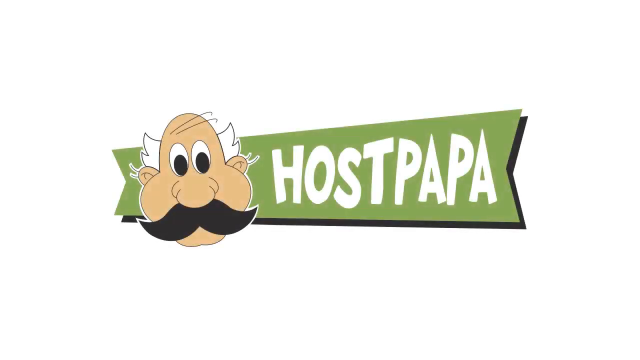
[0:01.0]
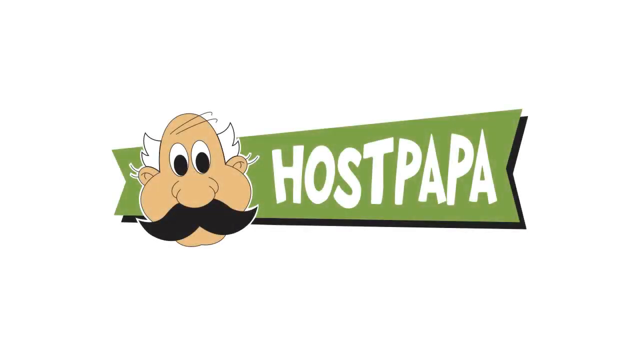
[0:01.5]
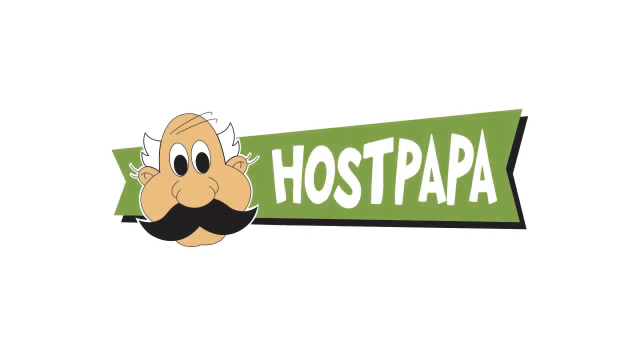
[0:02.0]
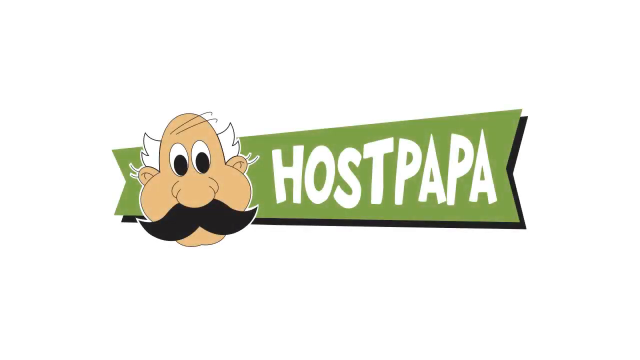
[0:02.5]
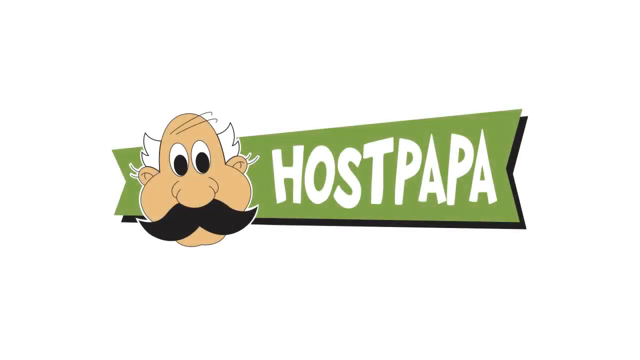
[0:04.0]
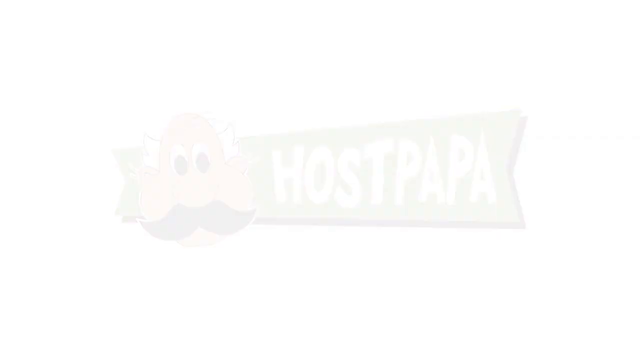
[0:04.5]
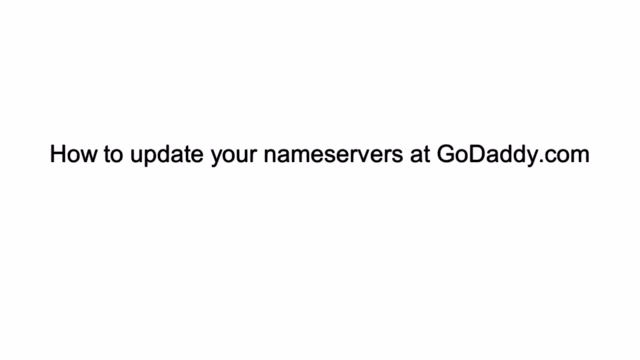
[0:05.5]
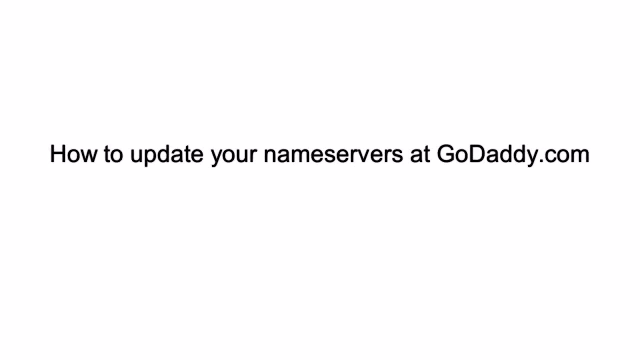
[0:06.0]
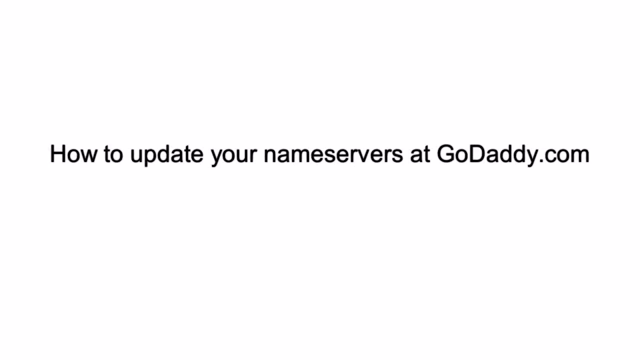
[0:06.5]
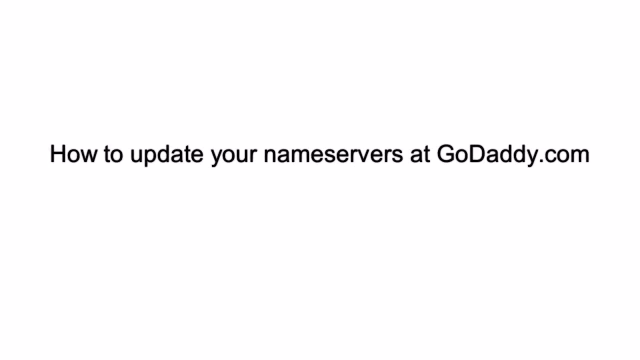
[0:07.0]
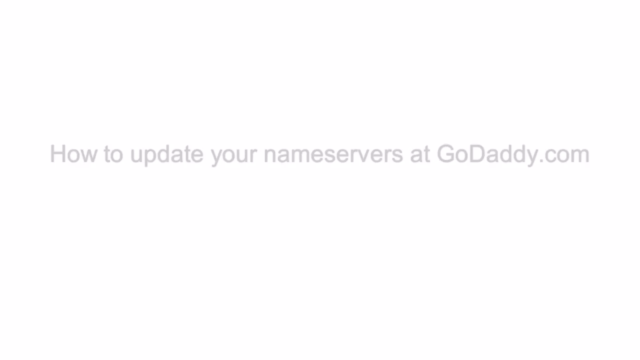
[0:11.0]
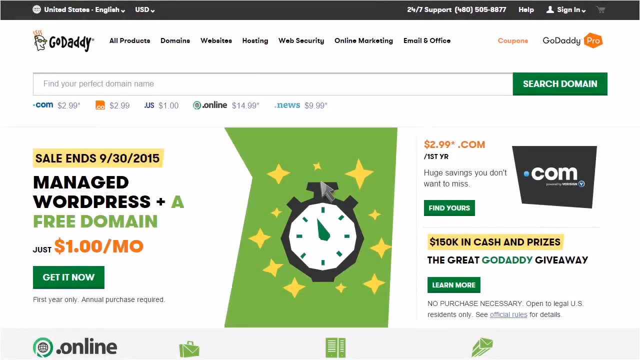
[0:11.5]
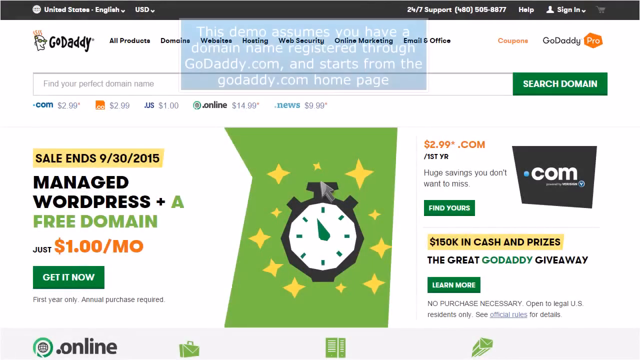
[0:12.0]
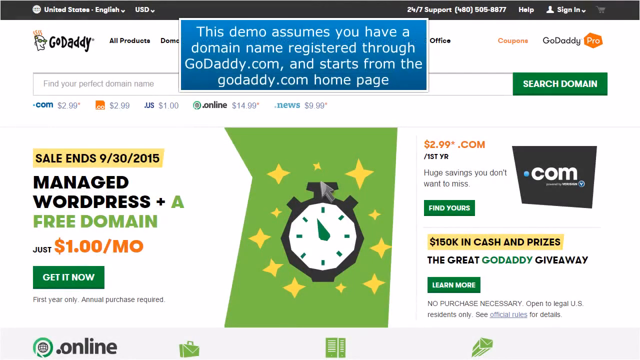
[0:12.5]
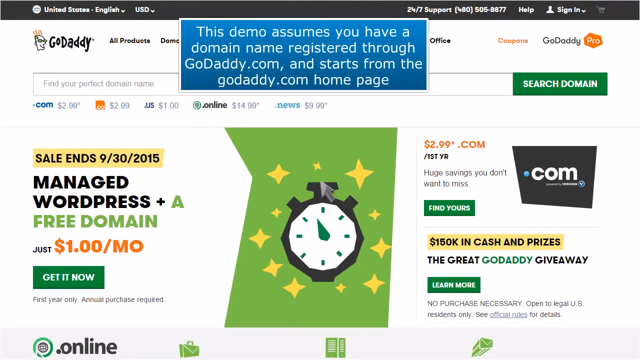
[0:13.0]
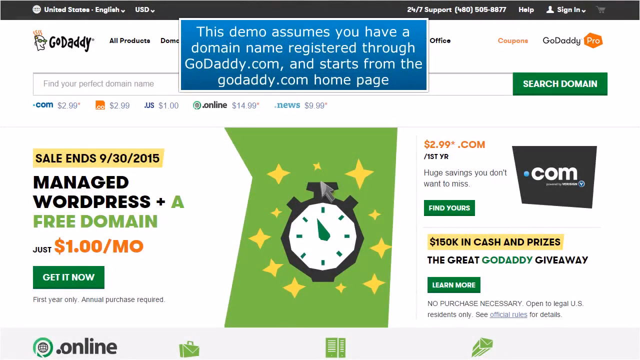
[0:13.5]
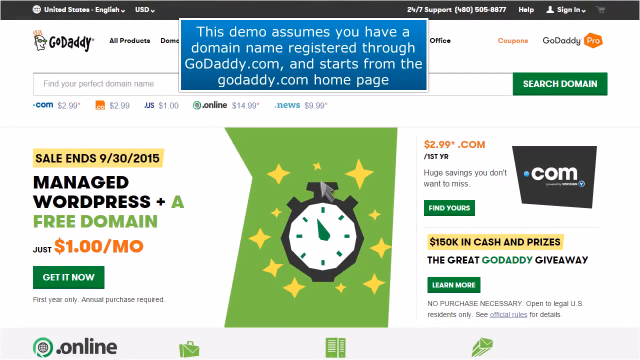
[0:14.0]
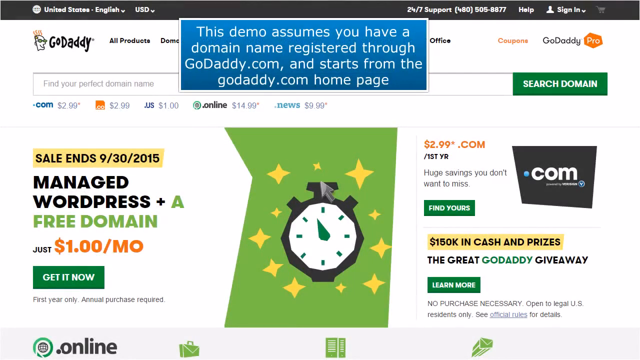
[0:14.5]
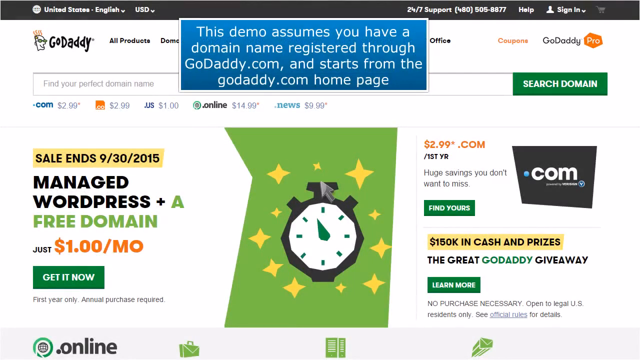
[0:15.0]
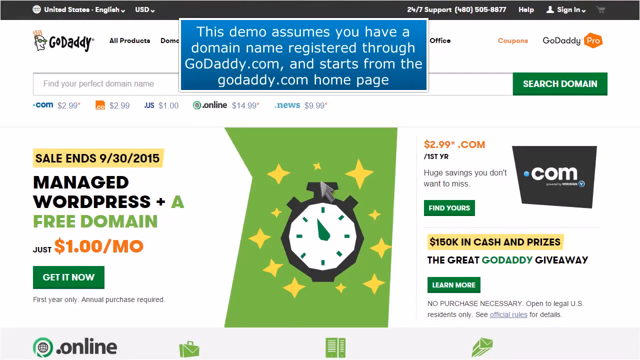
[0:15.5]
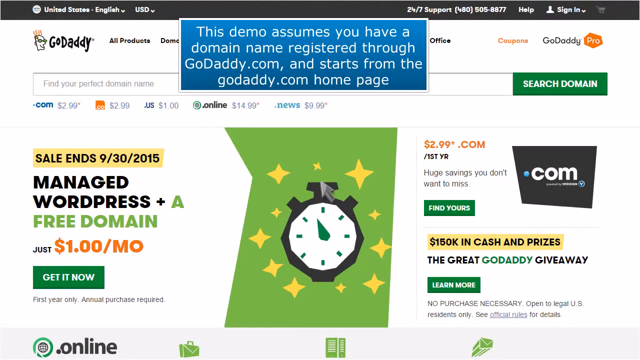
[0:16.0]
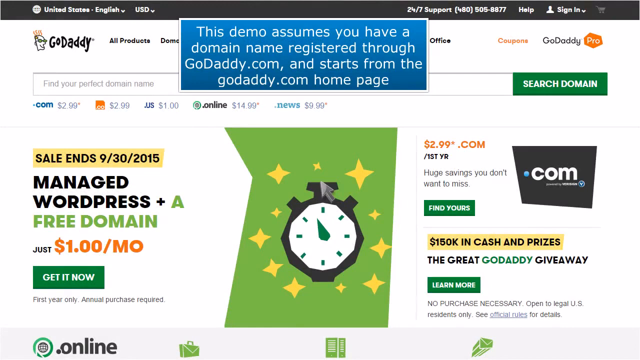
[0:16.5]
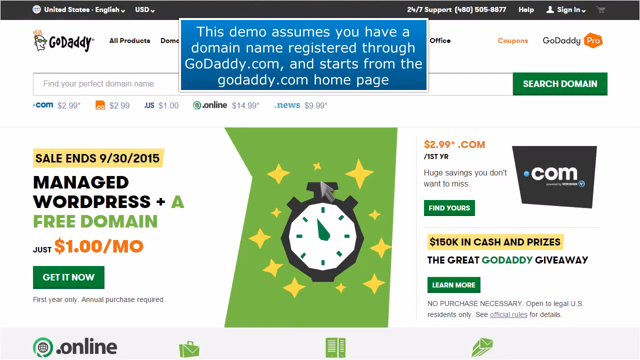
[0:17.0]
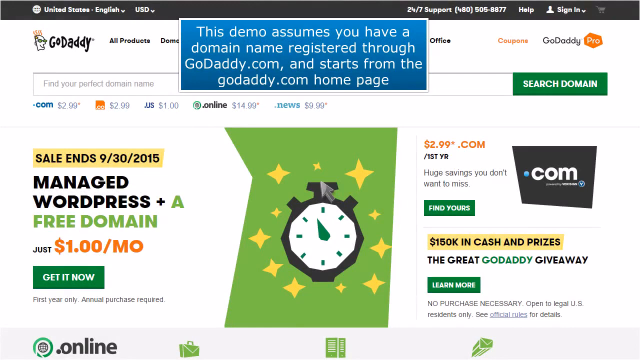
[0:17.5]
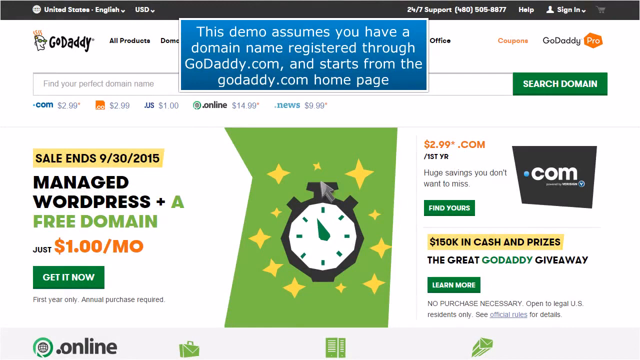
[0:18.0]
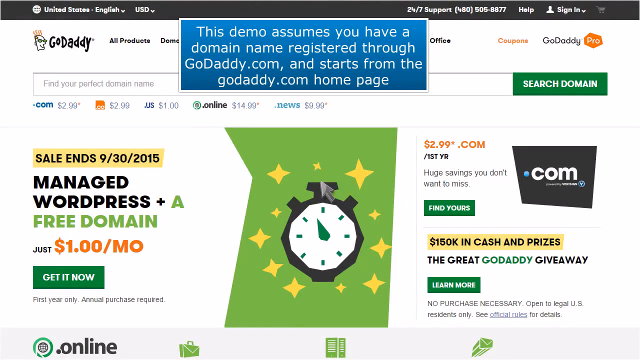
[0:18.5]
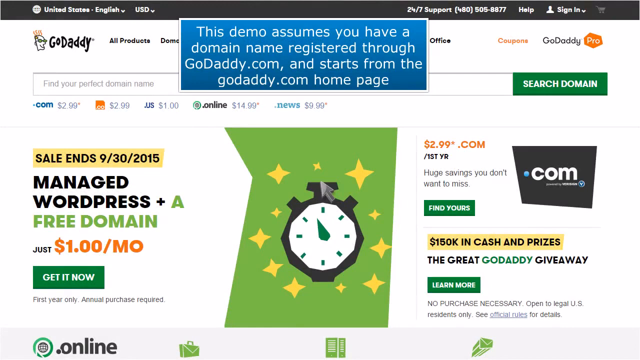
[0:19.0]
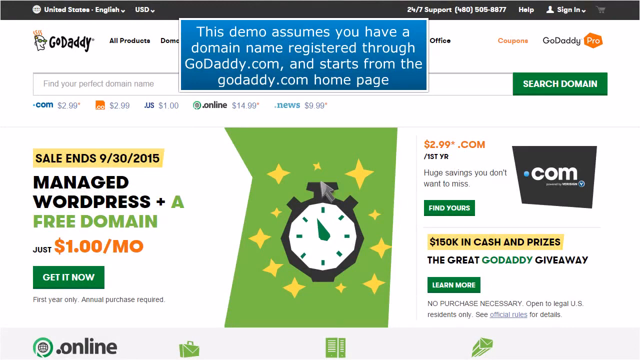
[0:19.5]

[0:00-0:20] The video is a demonstration of how to update name servers at GoDaddy.com, assuming a domain name is registered with GoDaddy.com. It starts from the GoDaddy.com home page.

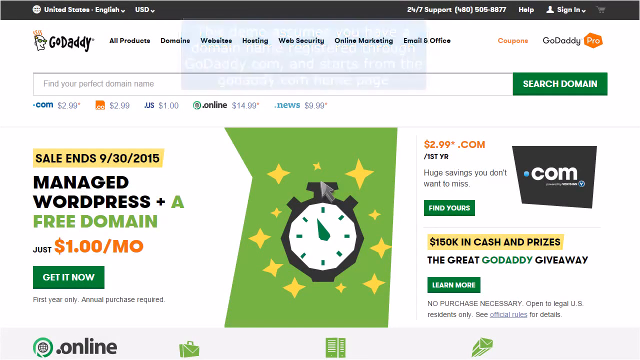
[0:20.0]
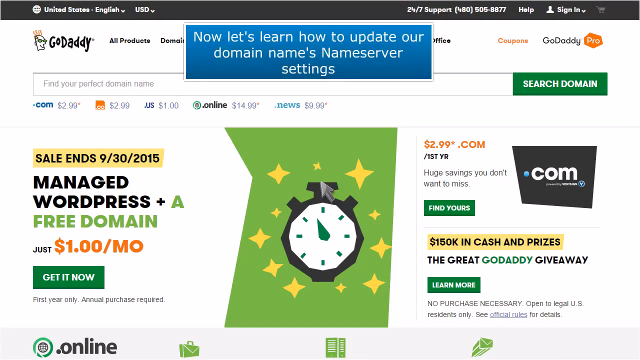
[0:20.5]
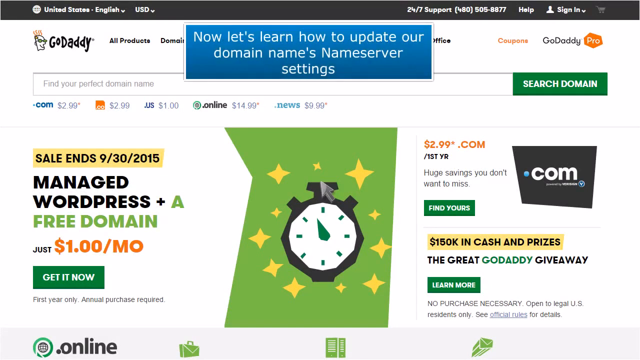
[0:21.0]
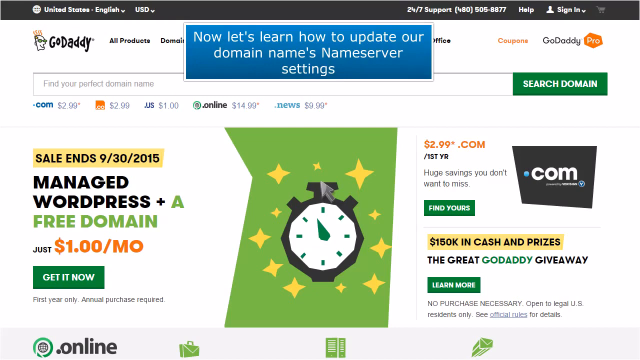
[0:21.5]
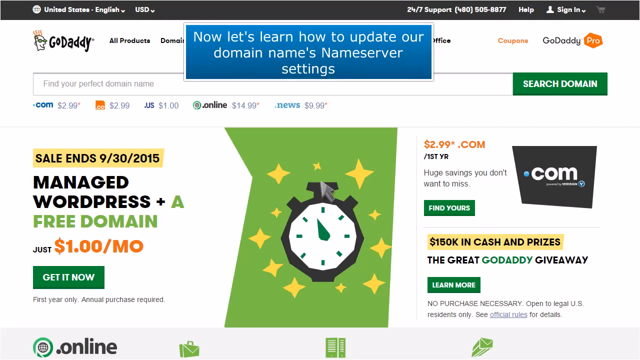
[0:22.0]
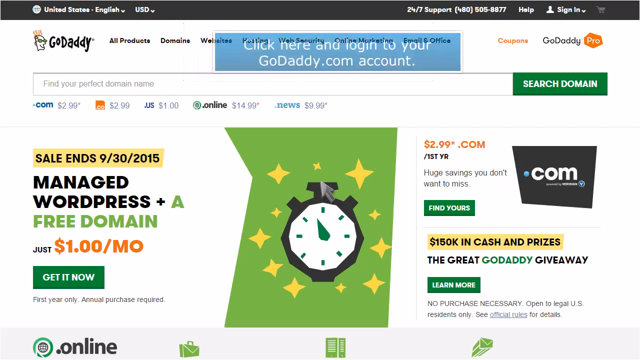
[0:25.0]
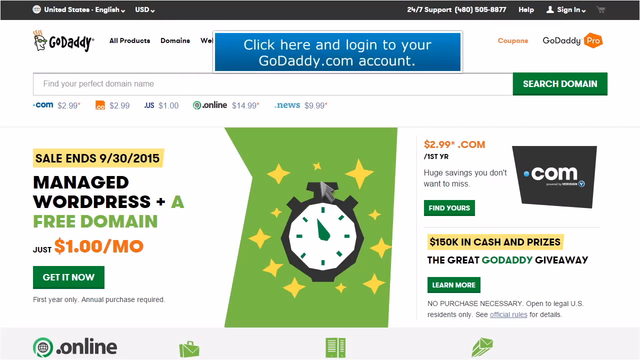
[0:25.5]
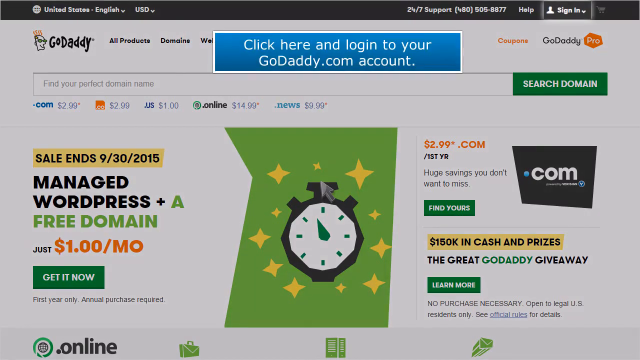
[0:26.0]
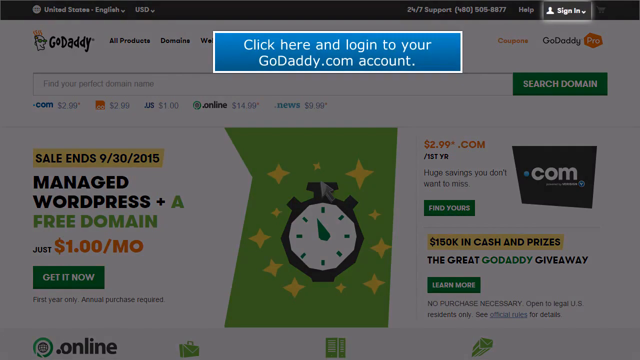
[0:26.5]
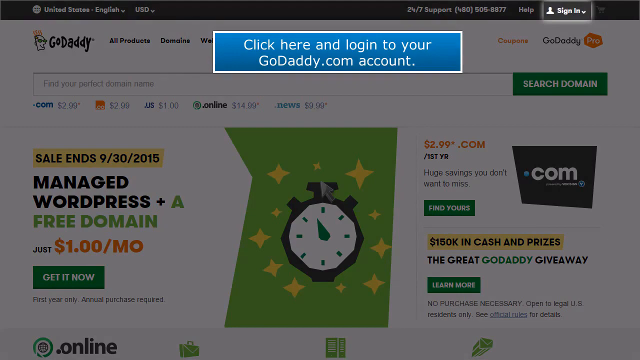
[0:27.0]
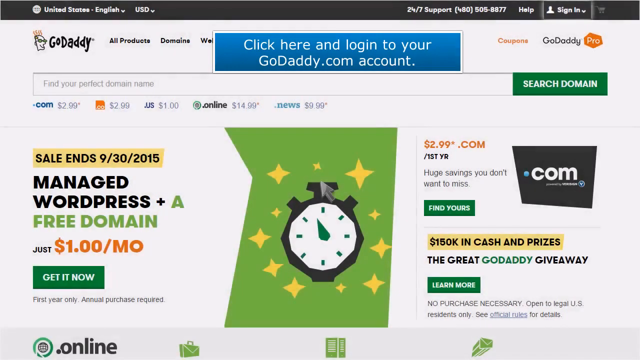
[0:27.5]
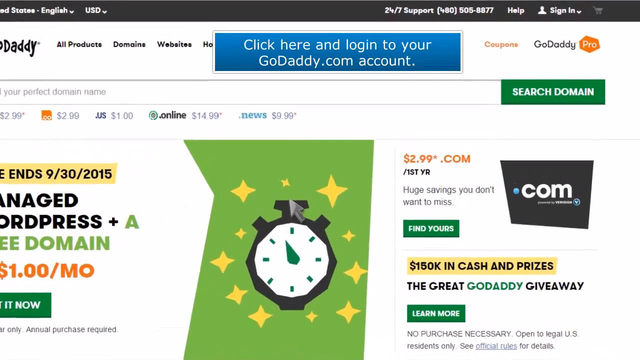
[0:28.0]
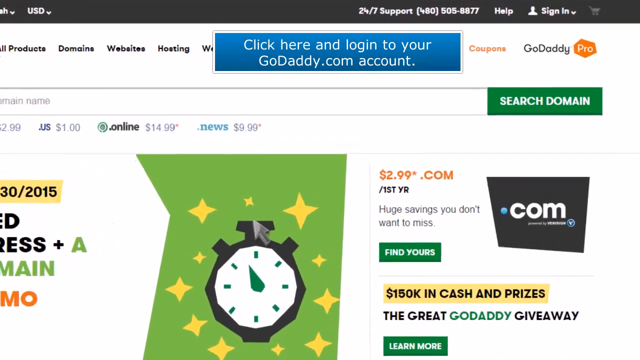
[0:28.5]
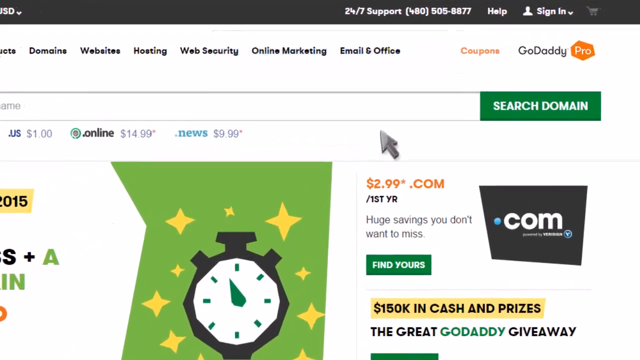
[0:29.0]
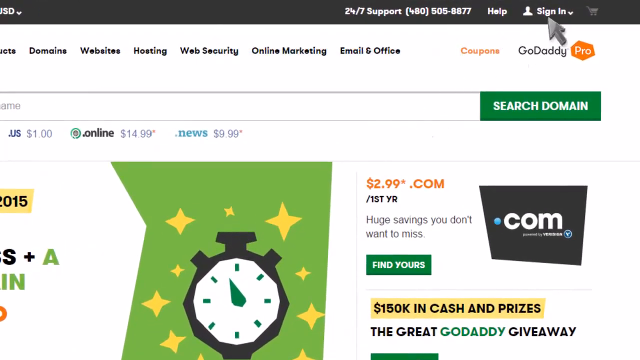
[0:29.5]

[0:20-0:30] The tutorial moves on to updating a domain's name server settings. The account option is clicked, and the process involves signing in and logging into the account to get access to the domains.